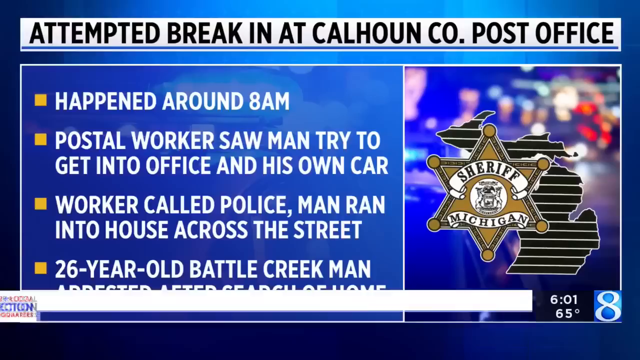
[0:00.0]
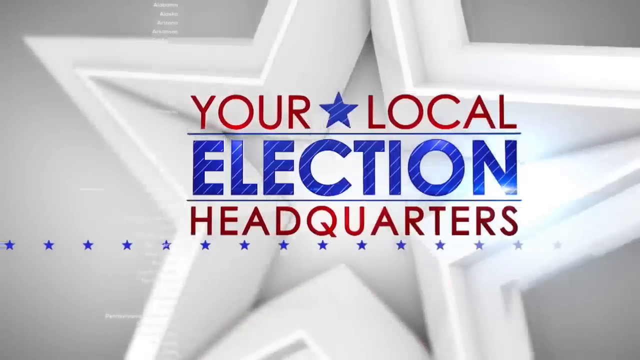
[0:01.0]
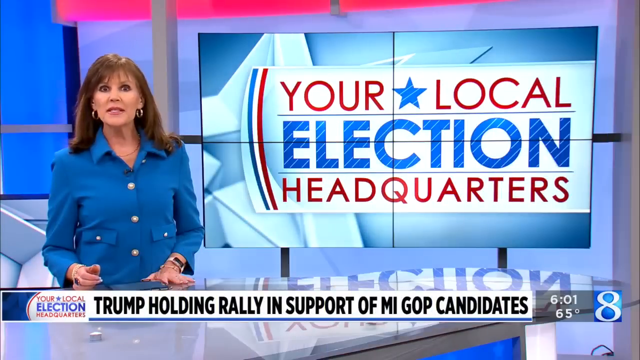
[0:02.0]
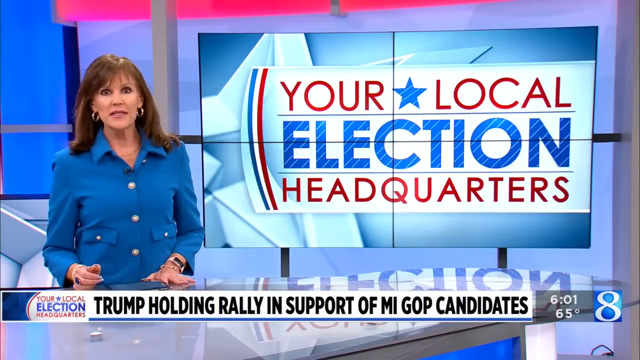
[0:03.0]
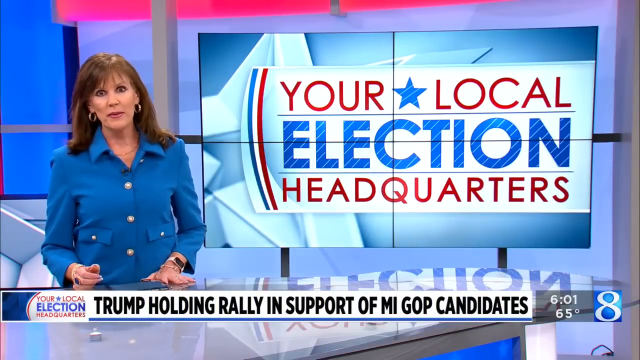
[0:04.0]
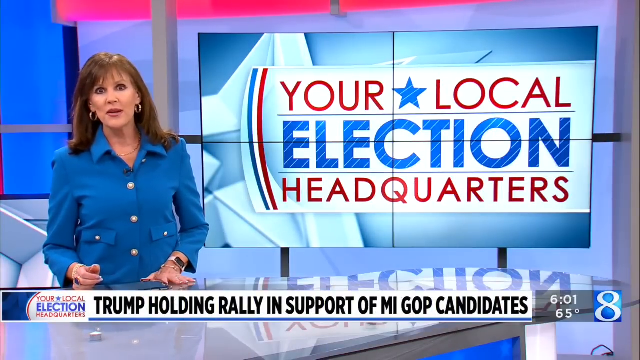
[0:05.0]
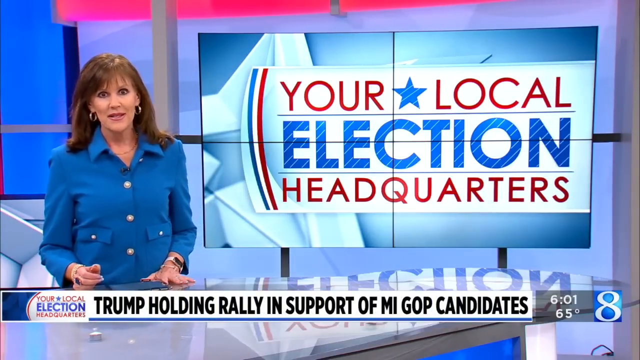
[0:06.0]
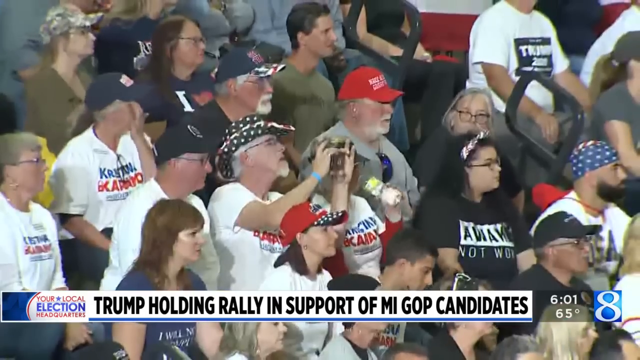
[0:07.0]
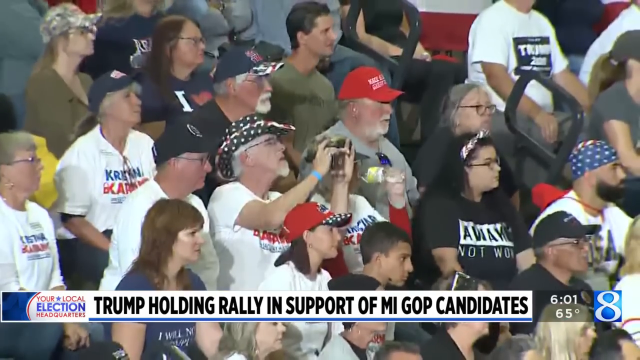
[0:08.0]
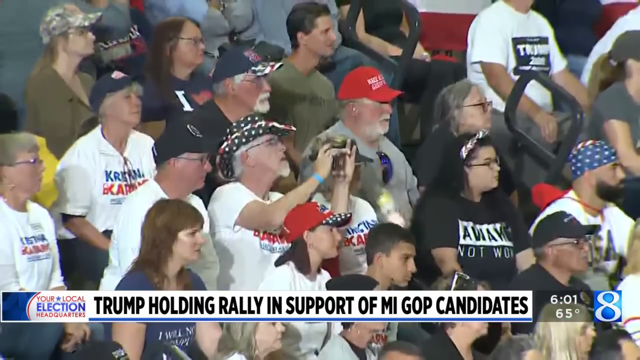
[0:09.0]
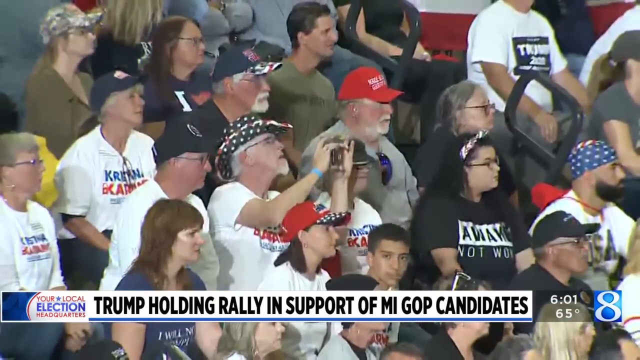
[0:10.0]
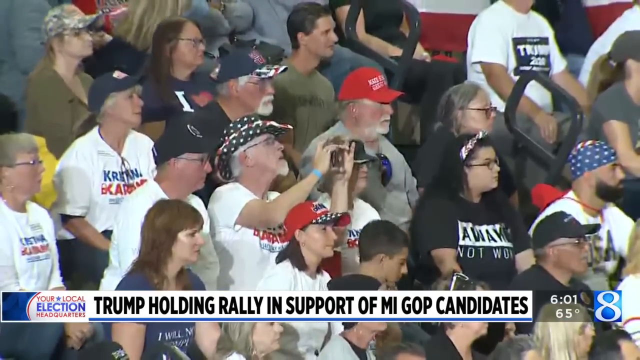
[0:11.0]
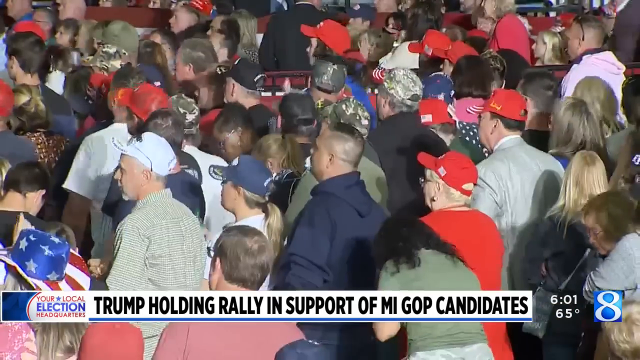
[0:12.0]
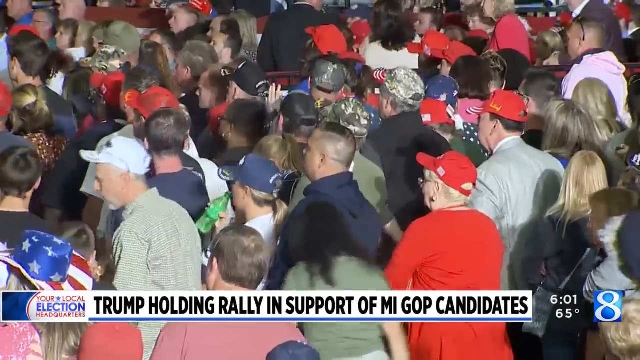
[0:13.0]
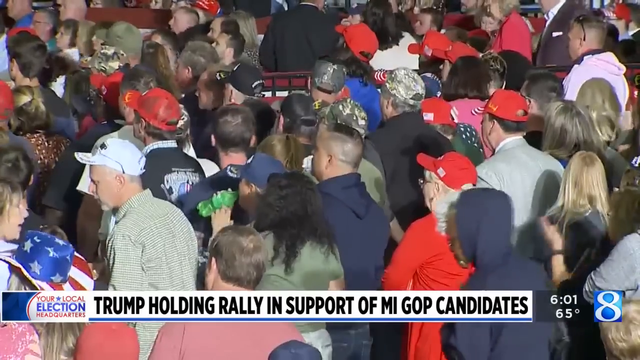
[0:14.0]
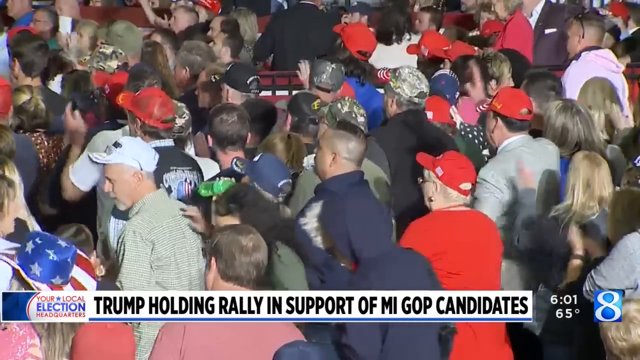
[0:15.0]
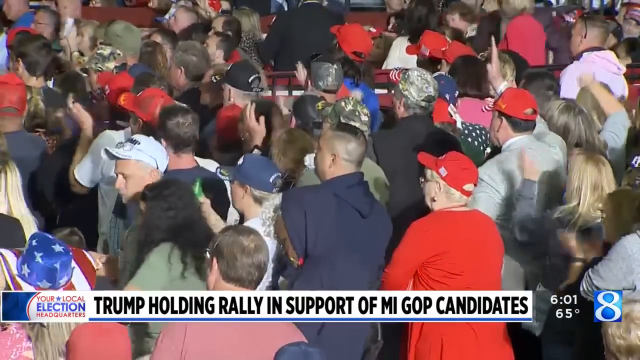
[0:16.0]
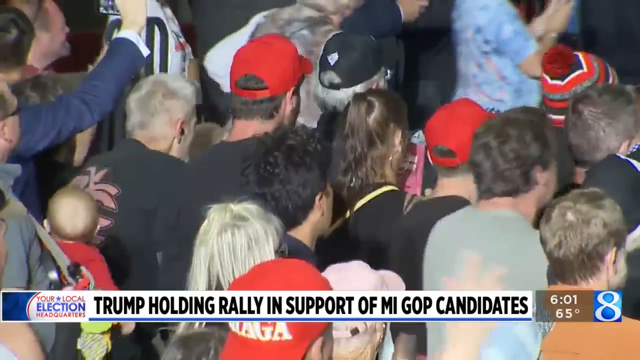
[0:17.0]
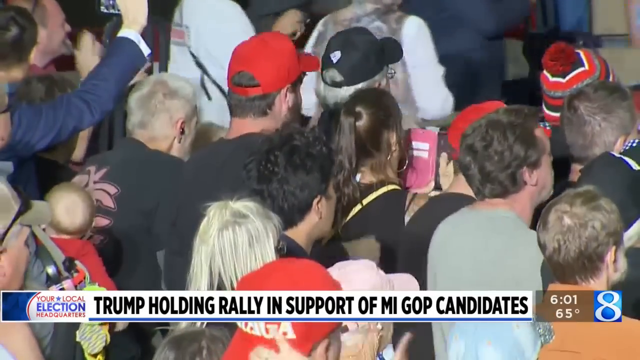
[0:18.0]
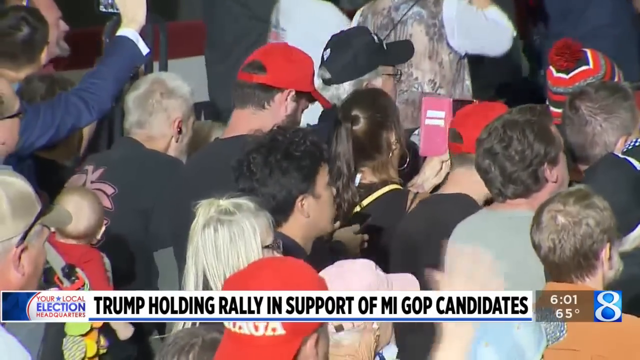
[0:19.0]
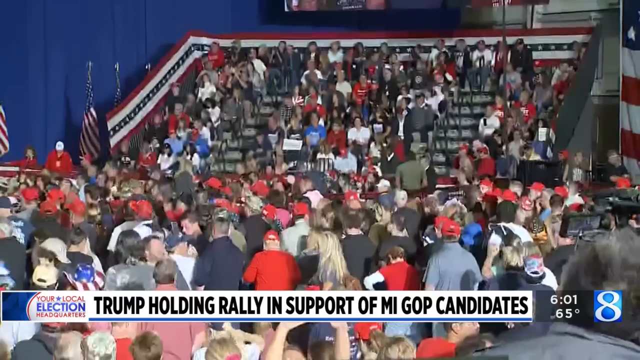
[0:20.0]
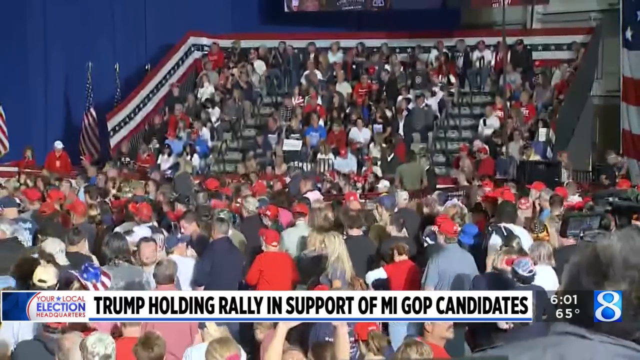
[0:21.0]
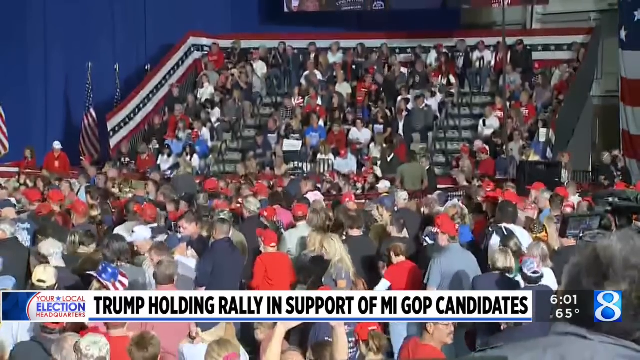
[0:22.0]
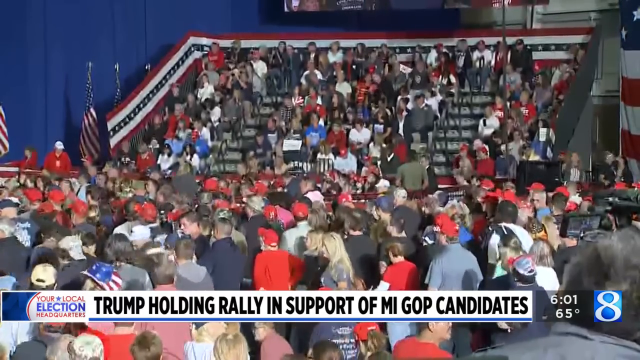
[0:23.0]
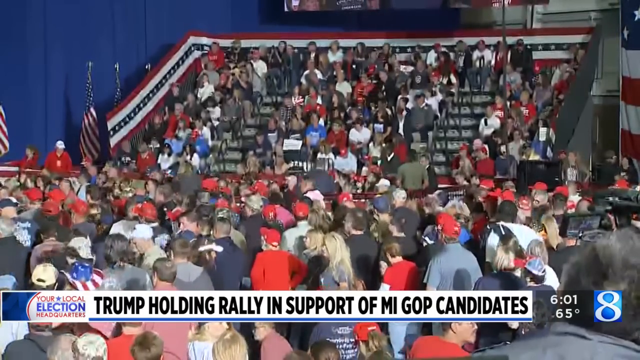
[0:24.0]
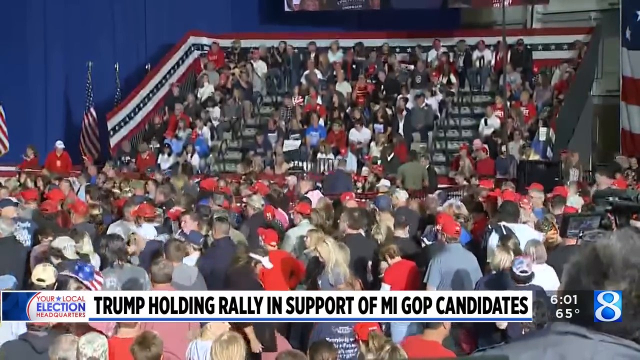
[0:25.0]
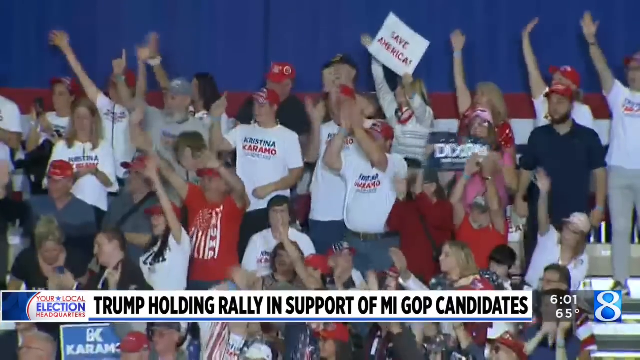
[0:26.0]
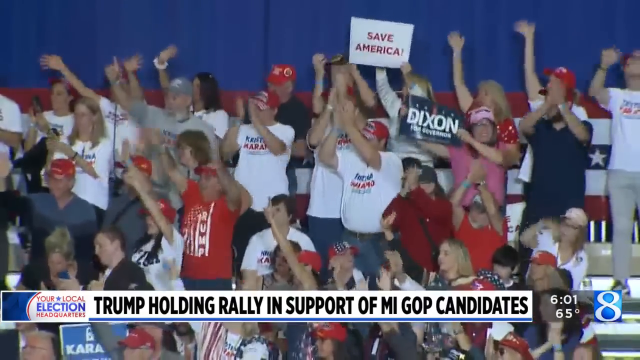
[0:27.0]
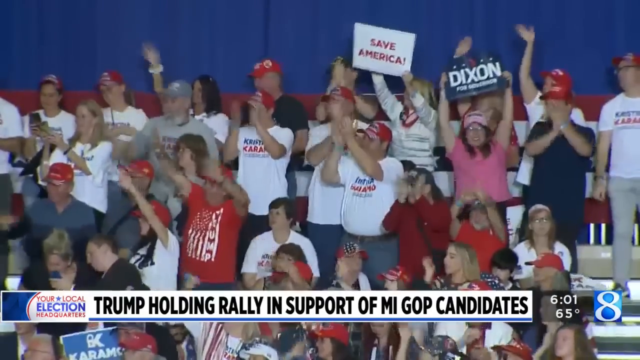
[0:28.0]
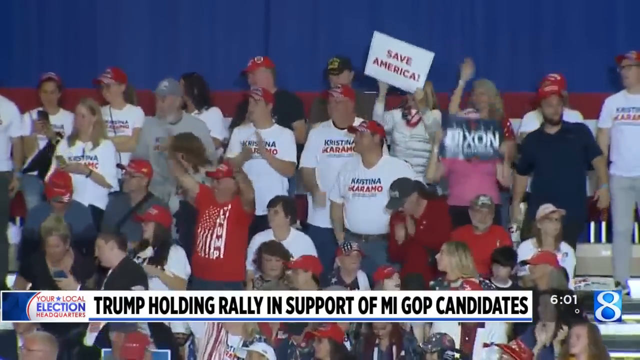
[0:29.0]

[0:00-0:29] A group of men and women appears to be at a Trump rally, many wearing red MAGA hats. It looks like a rally Trump held in support of Michigan GOP candidates. Local election headquarters is reporting on the results. The broadcast is on Channel 8 News, with the time shown as 6.01, presumably p.m., and a temperature of 65 degrees. Bleachers hold people who raise signs, cheer and wave their arms. The crowd wears cowboy hats, baseball caps, ski caps and scarves with flags, and in the middle there are people standing on the ground. One of the signs seems to say "Dixon." People wait for the candidates to come out on the stage and cheer, and then a brief snippet of the results appears on screen for maybe half a second, too quickly to make out the results or the particular candidates.